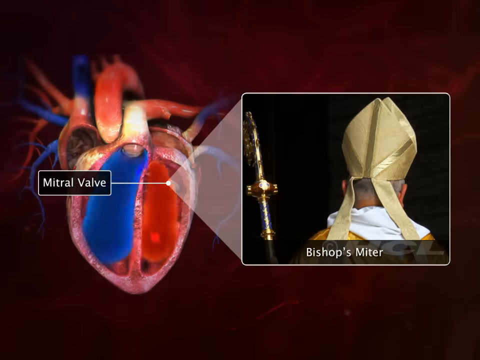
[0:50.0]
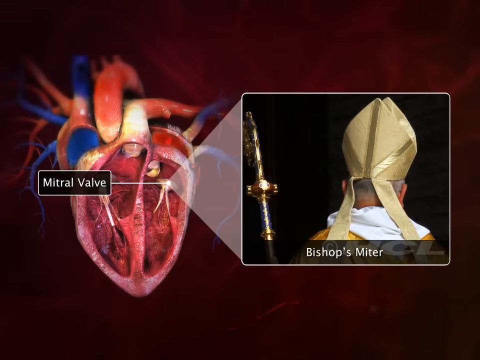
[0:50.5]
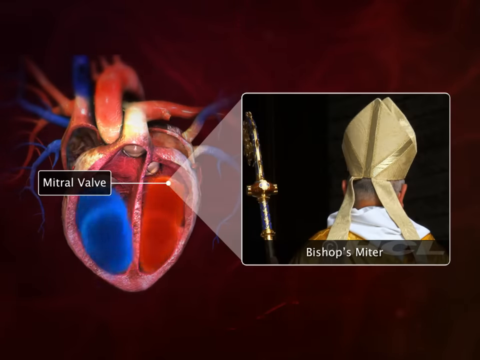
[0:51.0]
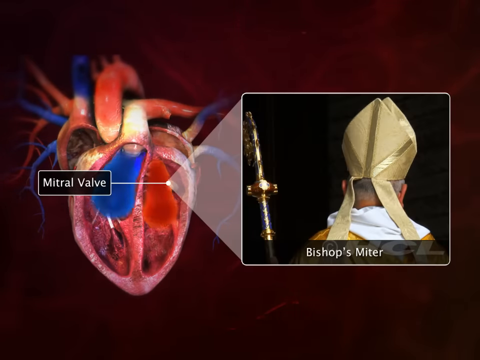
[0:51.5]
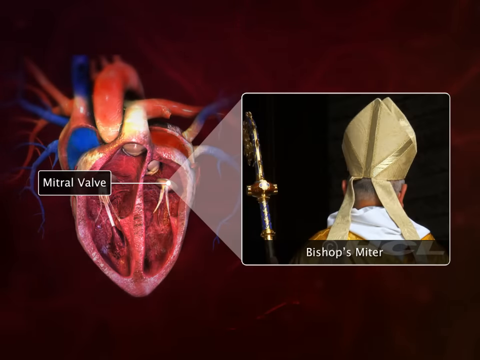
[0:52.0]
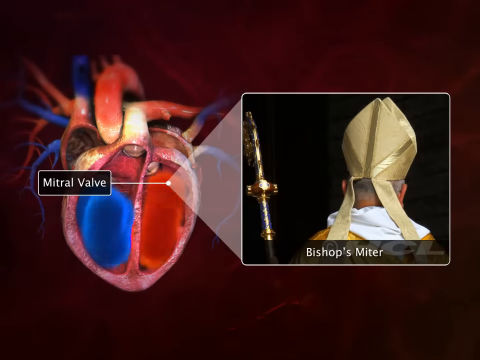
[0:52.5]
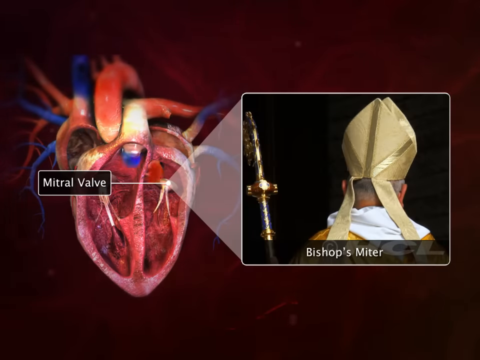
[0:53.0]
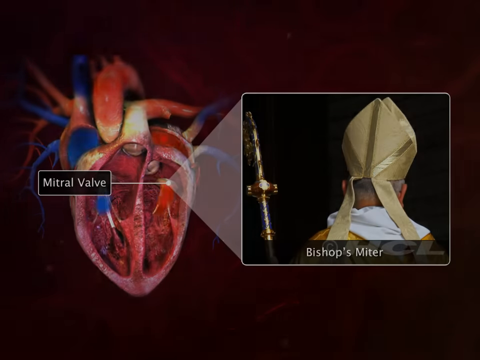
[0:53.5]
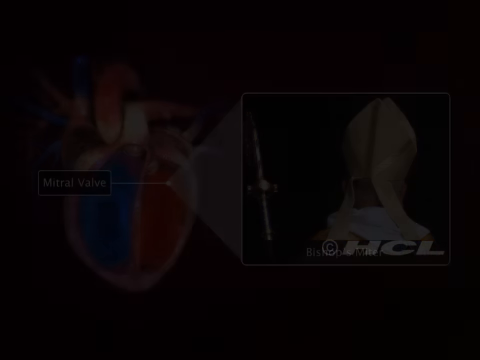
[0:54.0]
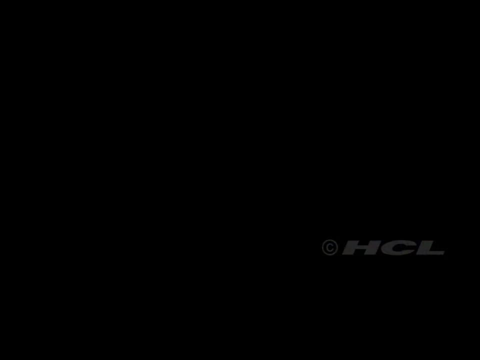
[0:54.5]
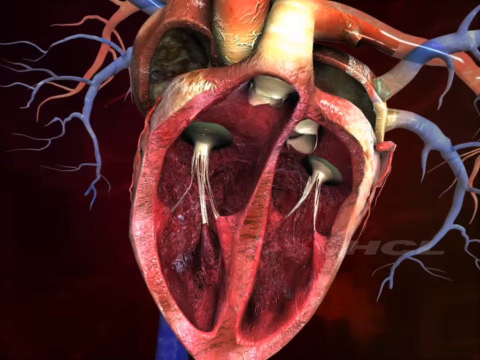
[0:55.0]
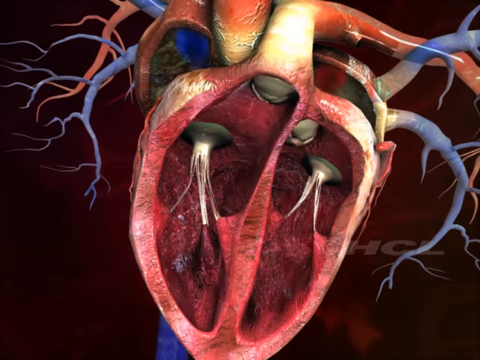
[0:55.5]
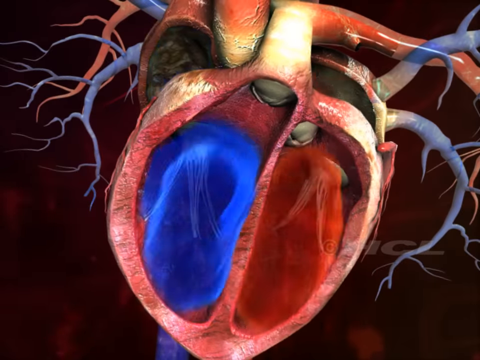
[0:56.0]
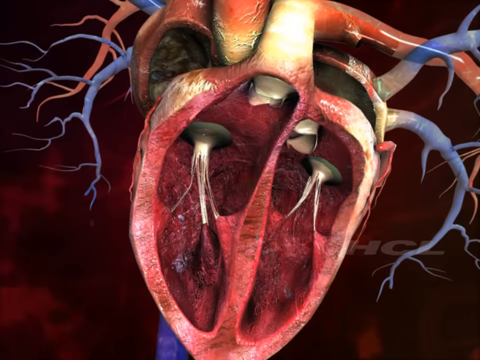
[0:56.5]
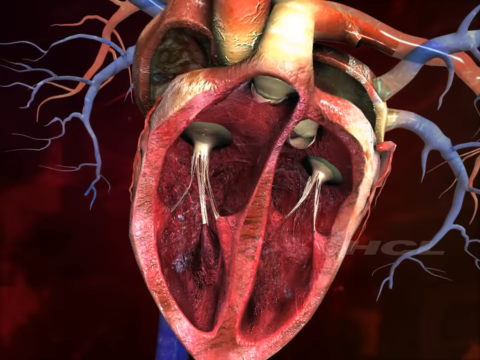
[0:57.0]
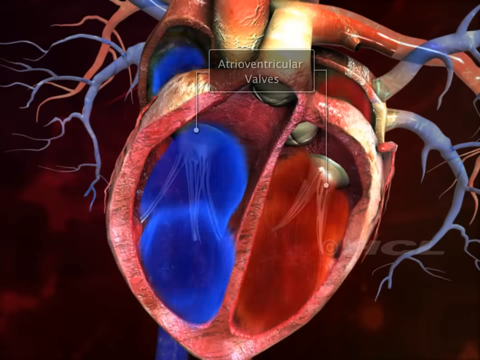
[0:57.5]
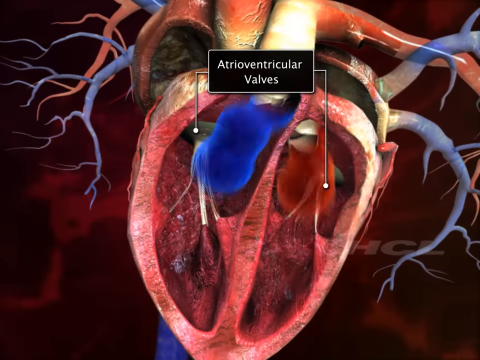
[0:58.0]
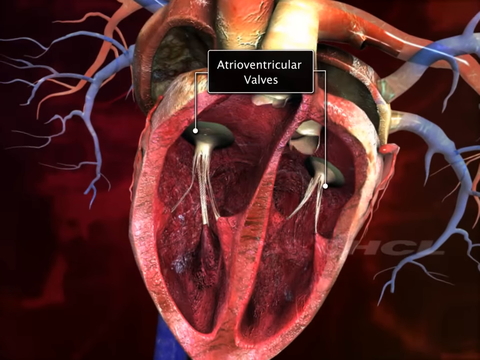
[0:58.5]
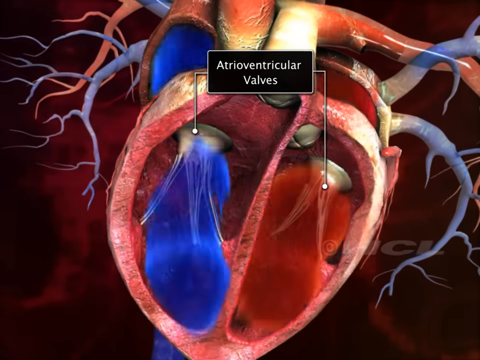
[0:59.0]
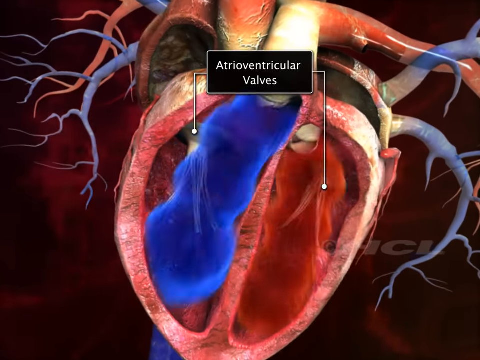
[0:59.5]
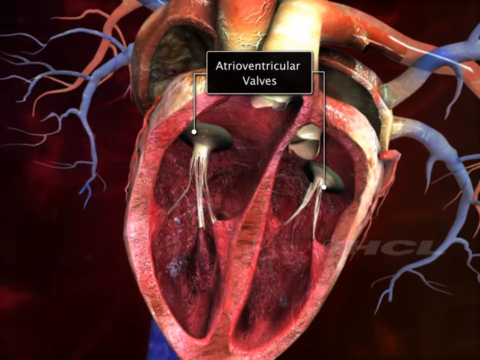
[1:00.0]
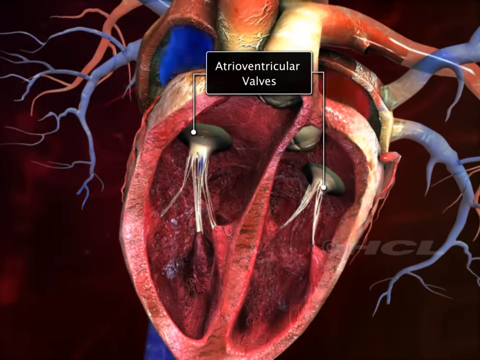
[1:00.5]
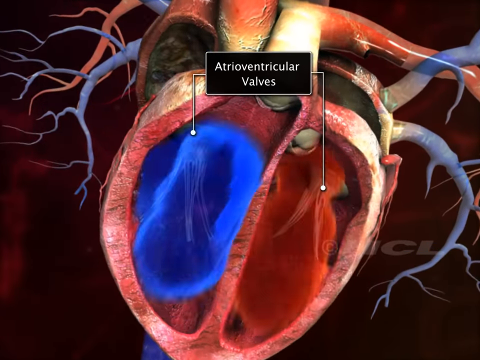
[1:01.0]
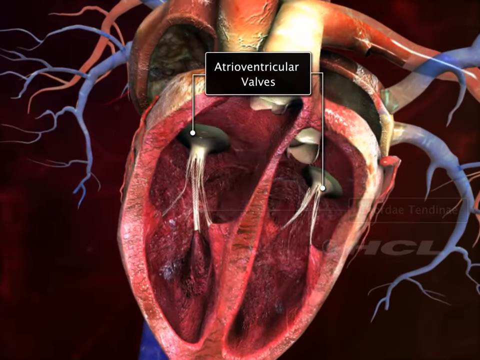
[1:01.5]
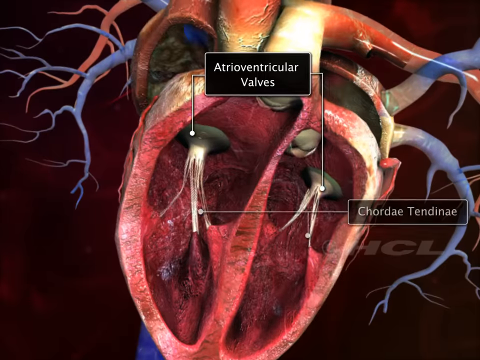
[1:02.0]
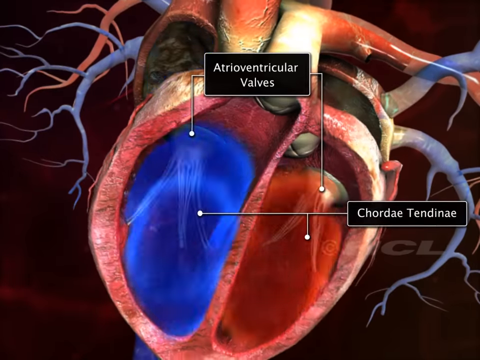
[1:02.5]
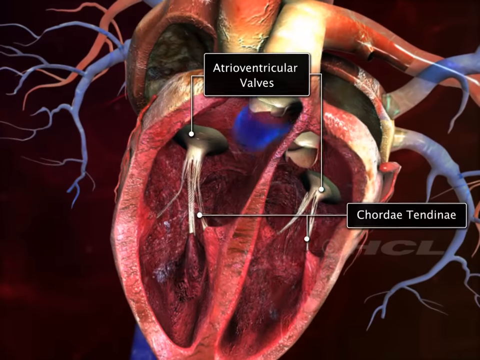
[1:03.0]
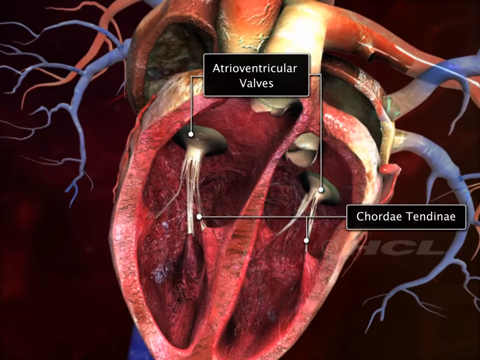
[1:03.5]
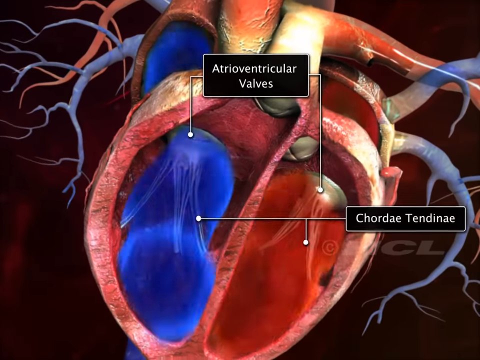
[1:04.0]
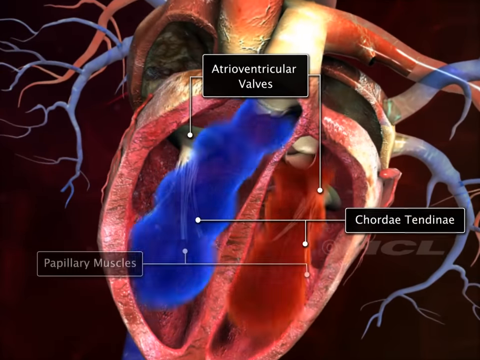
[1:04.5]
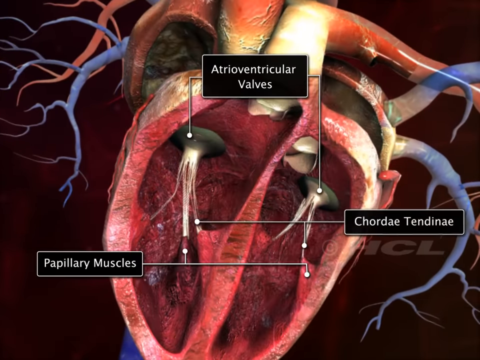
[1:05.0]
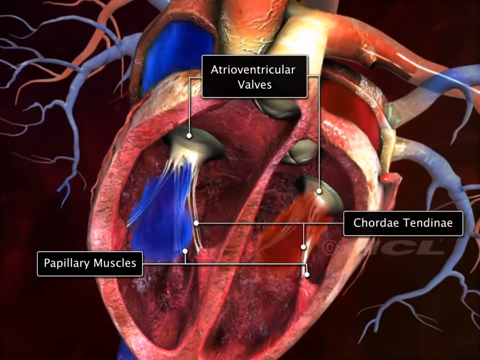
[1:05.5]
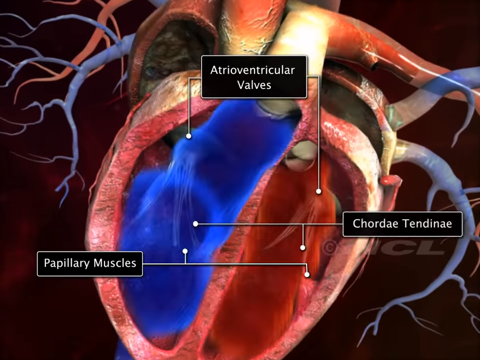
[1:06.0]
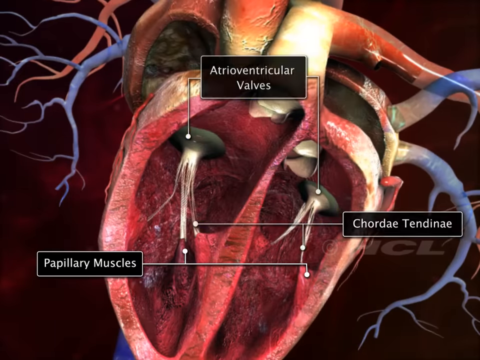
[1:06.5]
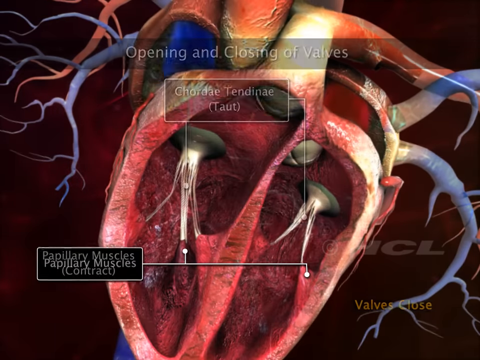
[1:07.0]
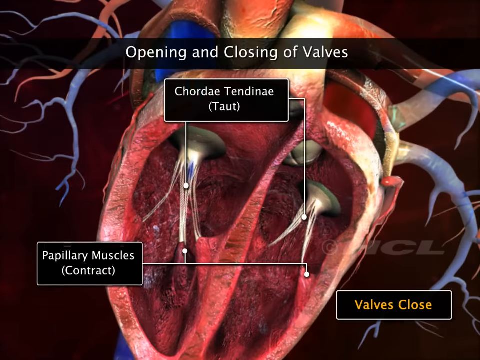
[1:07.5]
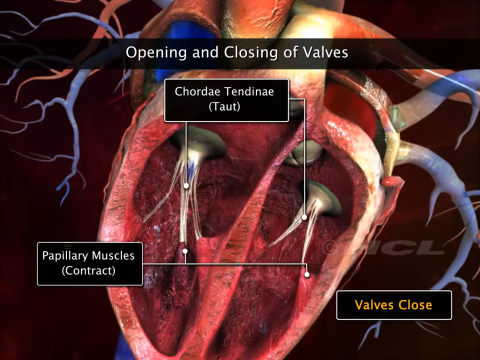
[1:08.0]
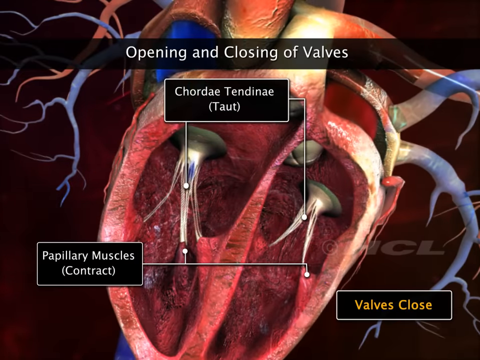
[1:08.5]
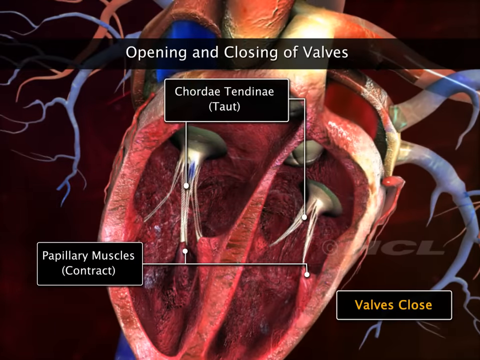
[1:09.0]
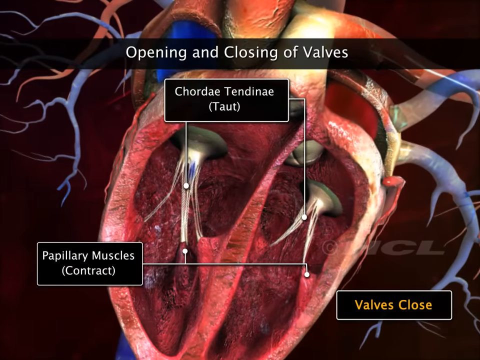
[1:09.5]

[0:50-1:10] A 3D model of a human heart, cut open, is shown. A bullet point and line connect a part of the heart to a rectangle reading "mitral valve," and some sort of projection comes out of the mitral valve, showing a rectangle reading "bishop's mitre" with a picture of a bishop holding some kind of staff. The heart keeps beating, with liquids moving up and down and back and forth. The scene shifts to a close-up of the heart, where arrows point to different sections called the atrioventricular valves. More arrows point to the chordae tendineae, there are papillary muscles, and text reads "contract." The labels point to different parts of the heart like a diagram. "valves close" appears in the bottom right corner, "chordae tendineae" with "(taut)" in parentheses appears at the top, and at the very top of the screen white text reads "opening and closing of valves."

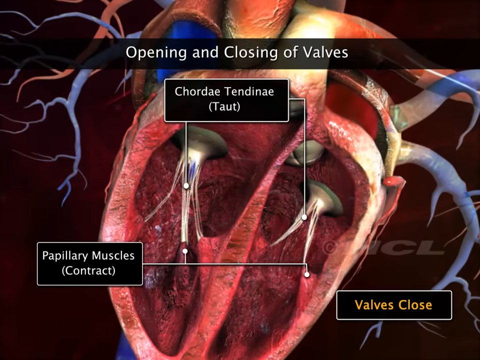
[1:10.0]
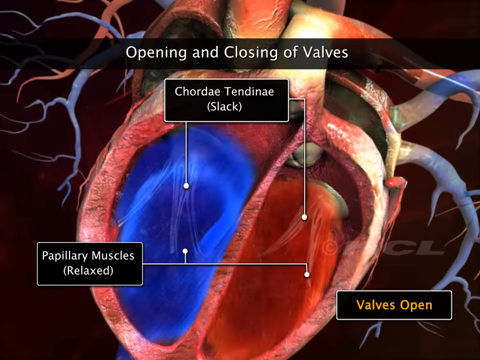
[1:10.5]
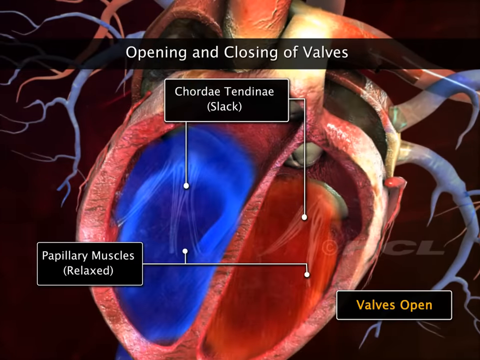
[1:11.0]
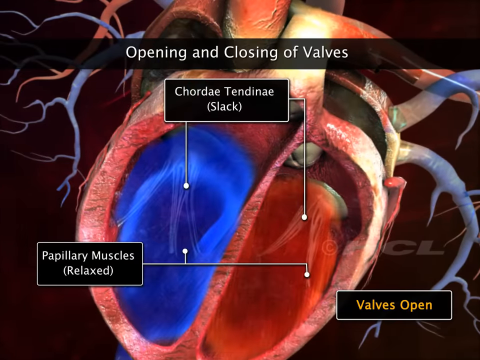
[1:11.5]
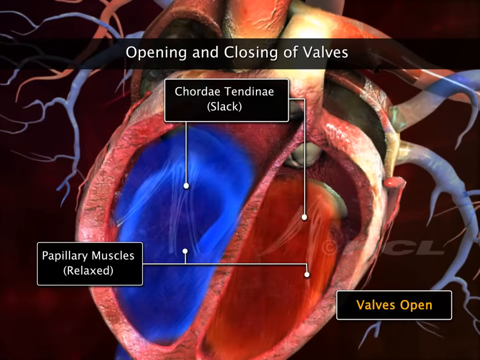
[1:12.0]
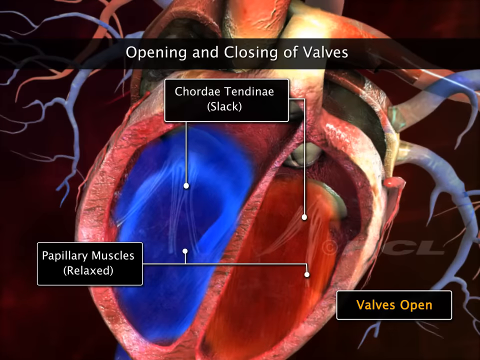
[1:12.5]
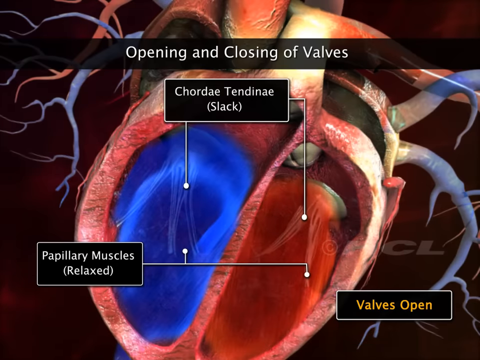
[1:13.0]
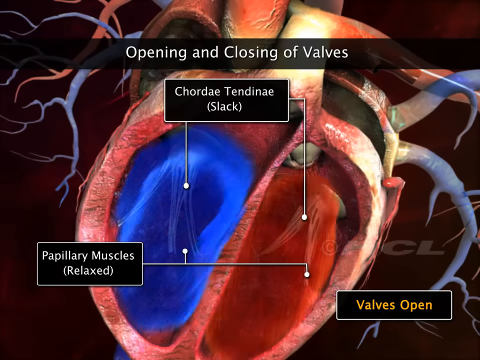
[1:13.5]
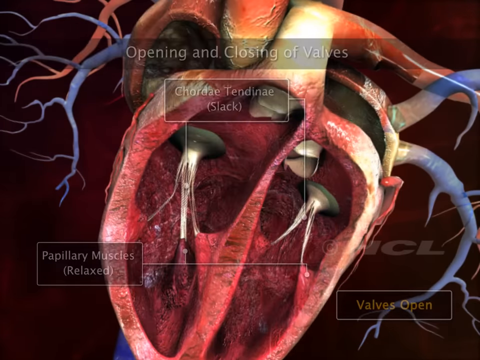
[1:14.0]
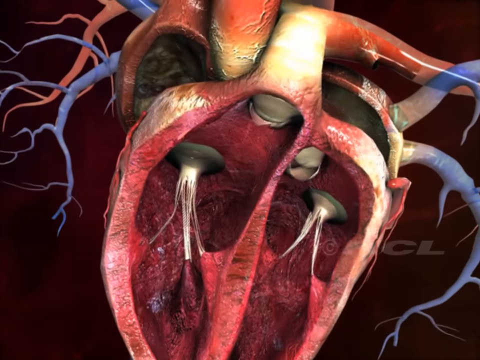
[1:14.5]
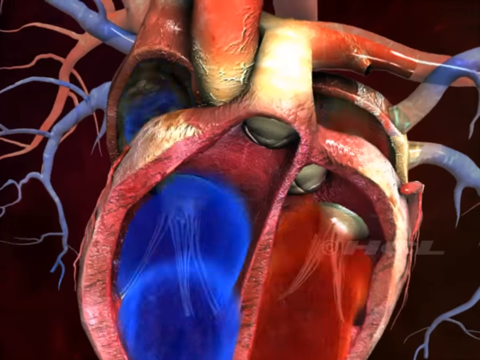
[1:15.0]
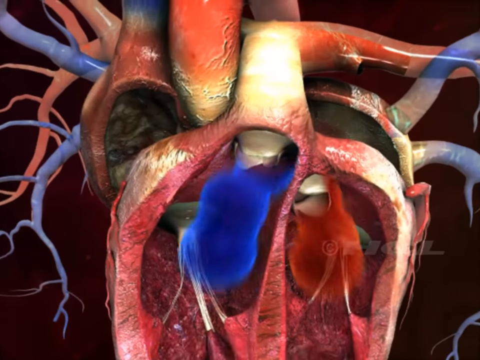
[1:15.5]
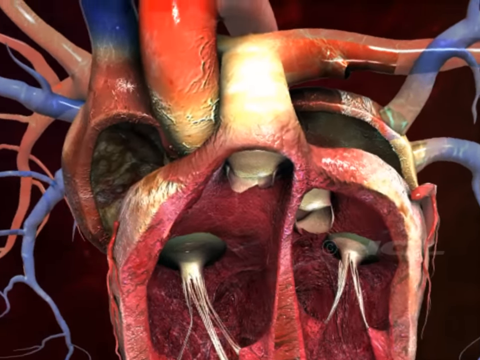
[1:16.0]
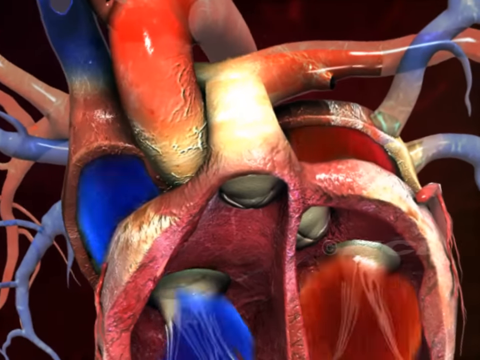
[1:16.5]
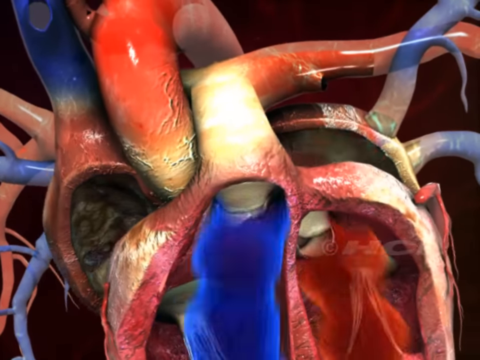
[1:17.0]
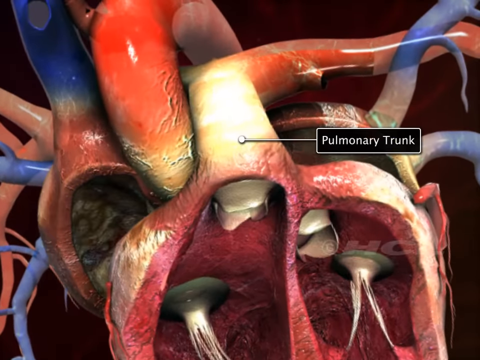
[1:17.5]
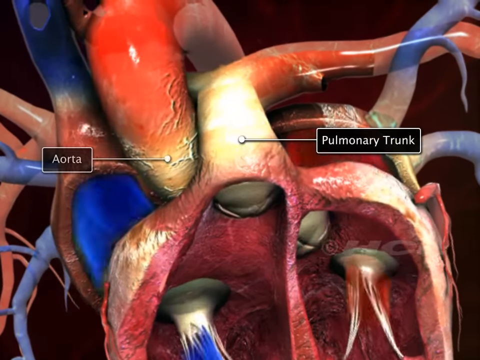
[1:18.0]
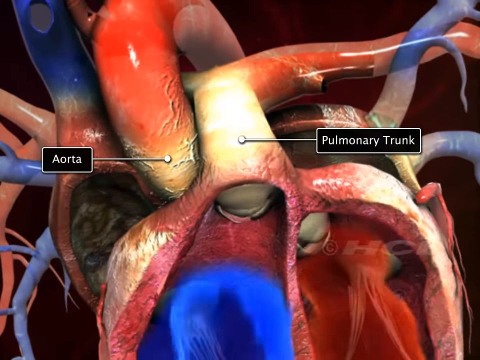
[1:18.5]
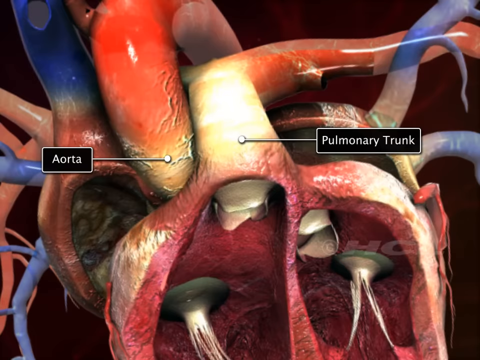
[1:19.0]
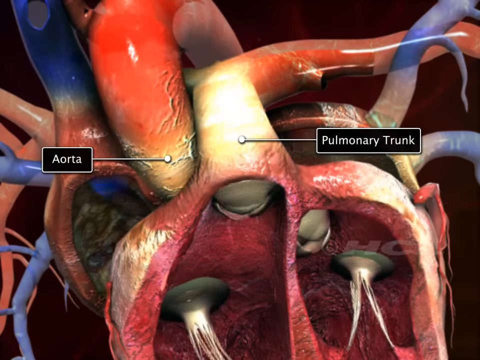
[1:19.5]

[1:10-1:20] A 3D diagram of the human heart is shown with "opening and closing of valves" at the very top. Bullet points point to different parts of the heart: two chordae tendineae are shown, as are the papillary muscles and where they are. "valves close" appears in the bottom right corner. The heart beats slowly, with blue liquid and red liquid being pushed out of and sucked into different parts. Parts of the heart are then shown for the pulmonary trunk, and the aorta is on the left side of the image, showing the different valves that open and close as the heart beats.